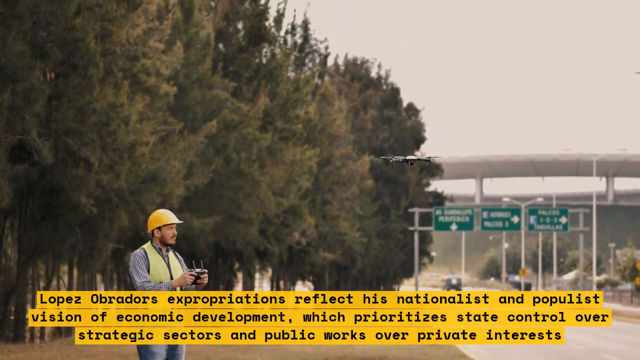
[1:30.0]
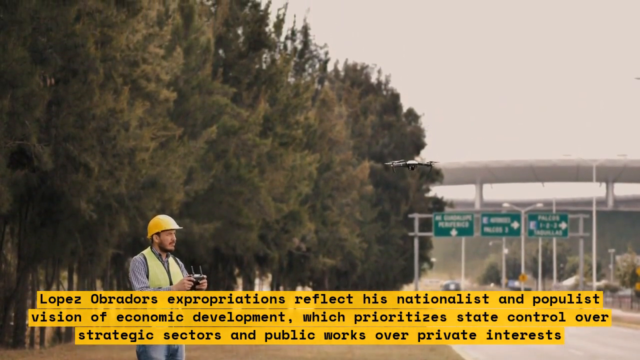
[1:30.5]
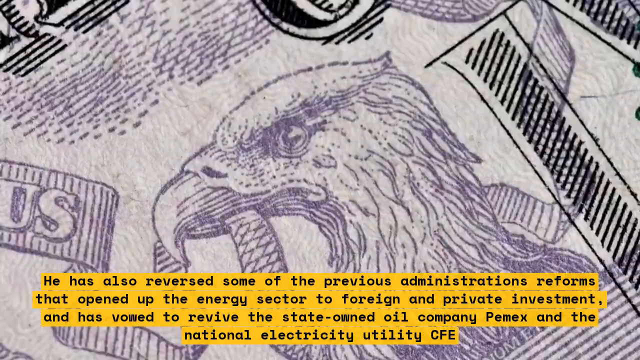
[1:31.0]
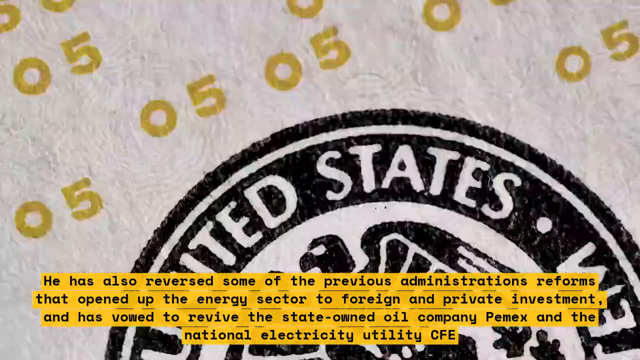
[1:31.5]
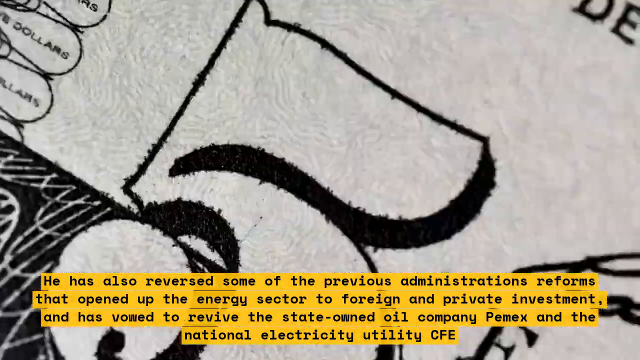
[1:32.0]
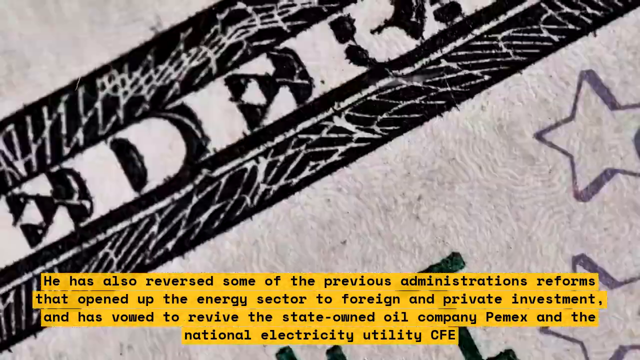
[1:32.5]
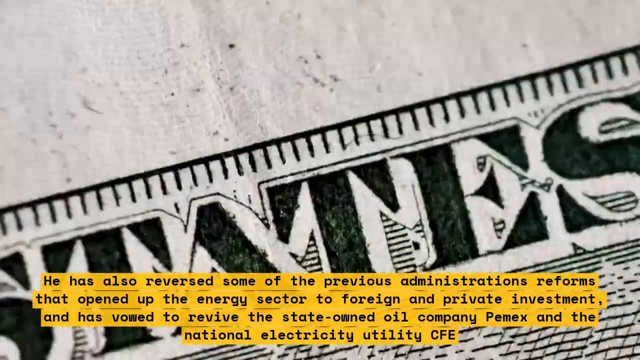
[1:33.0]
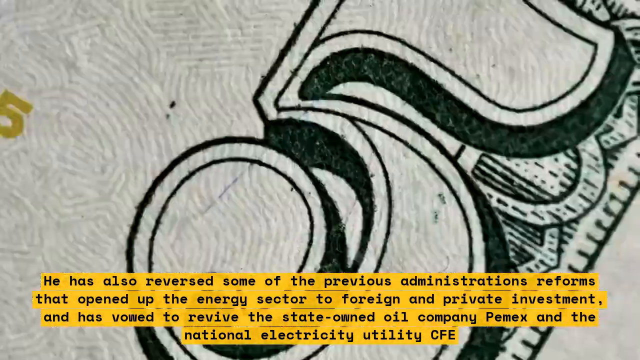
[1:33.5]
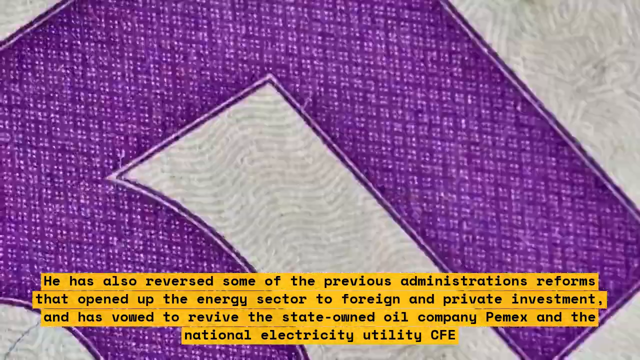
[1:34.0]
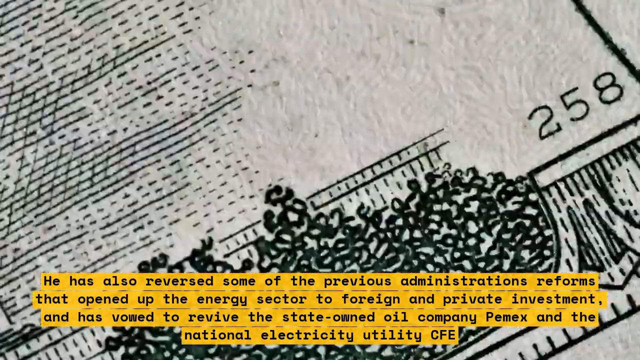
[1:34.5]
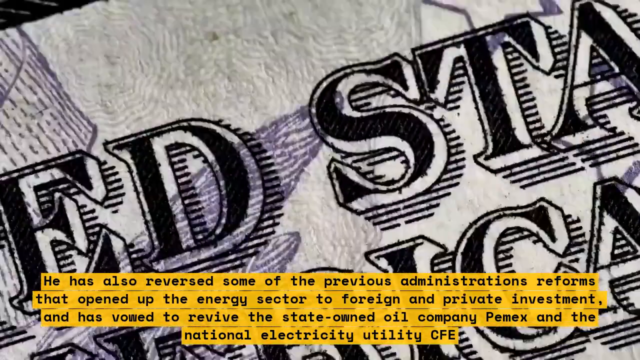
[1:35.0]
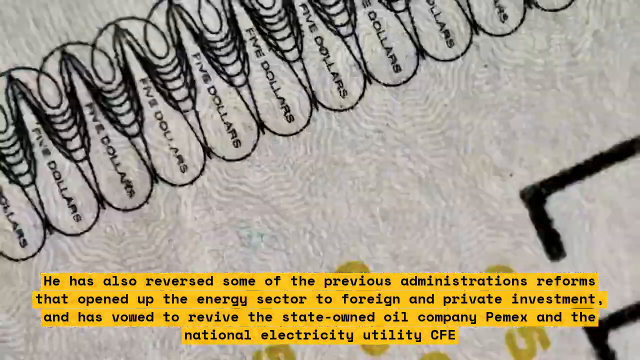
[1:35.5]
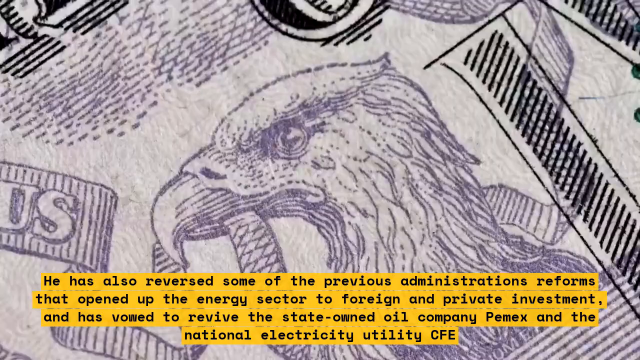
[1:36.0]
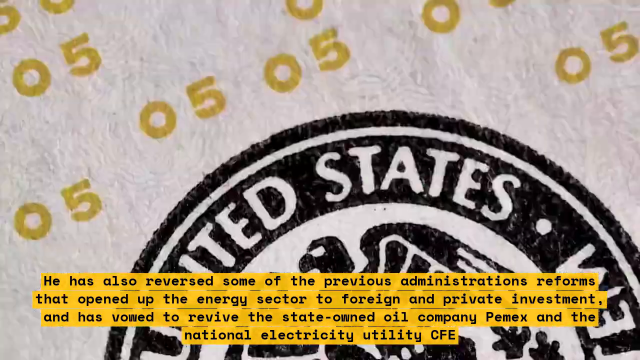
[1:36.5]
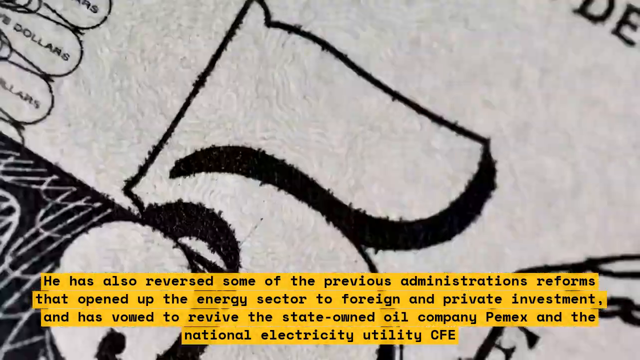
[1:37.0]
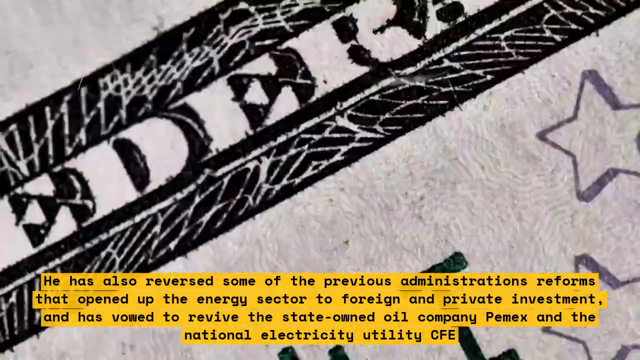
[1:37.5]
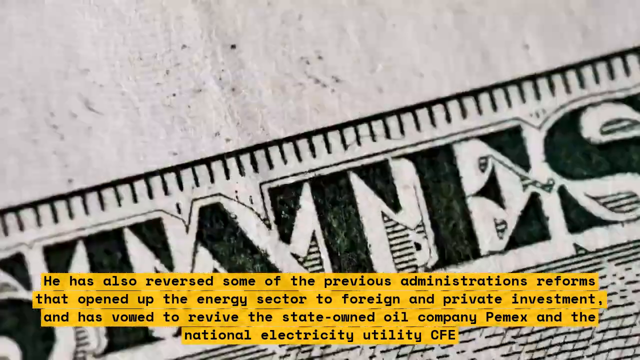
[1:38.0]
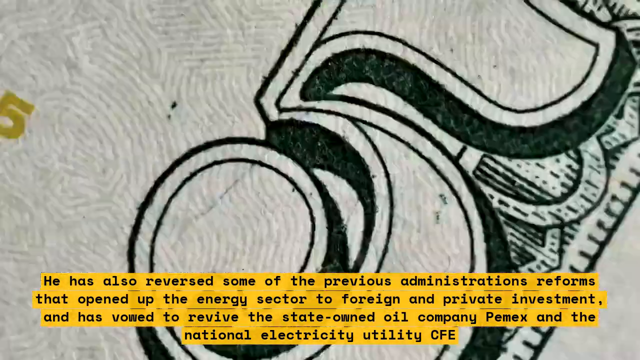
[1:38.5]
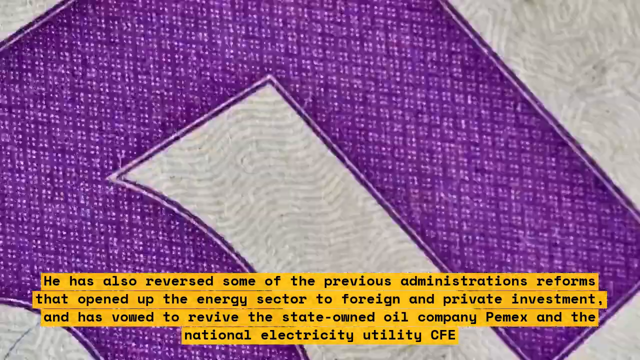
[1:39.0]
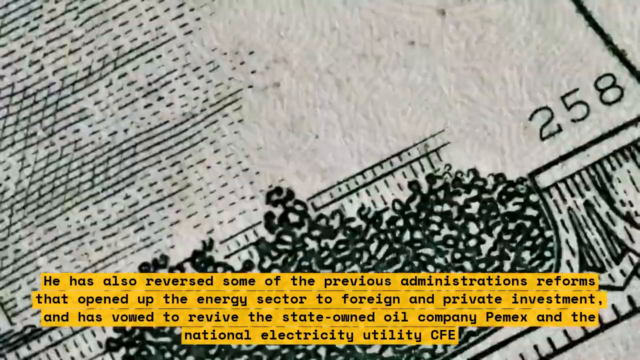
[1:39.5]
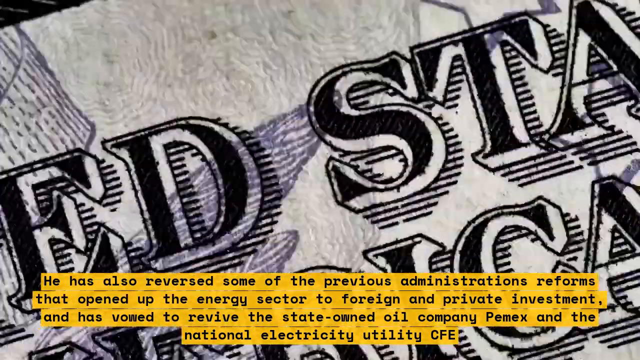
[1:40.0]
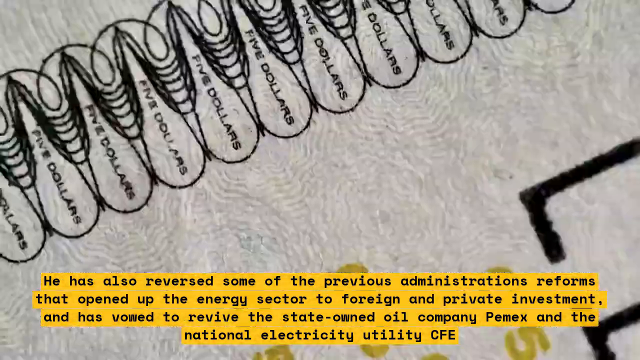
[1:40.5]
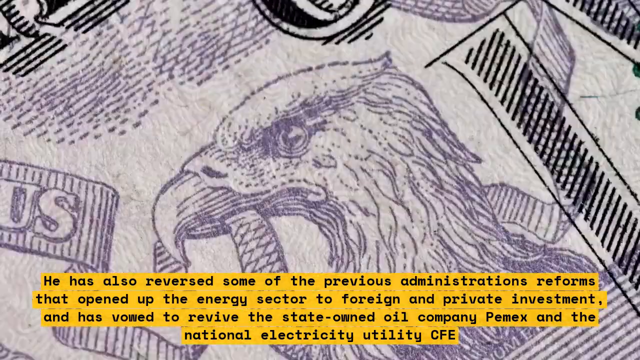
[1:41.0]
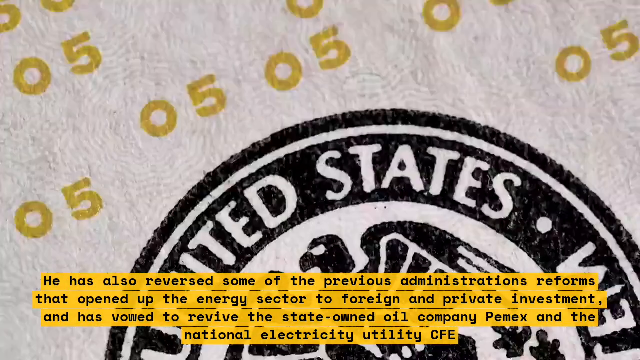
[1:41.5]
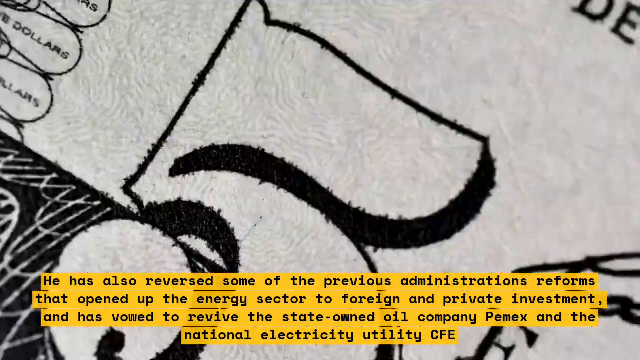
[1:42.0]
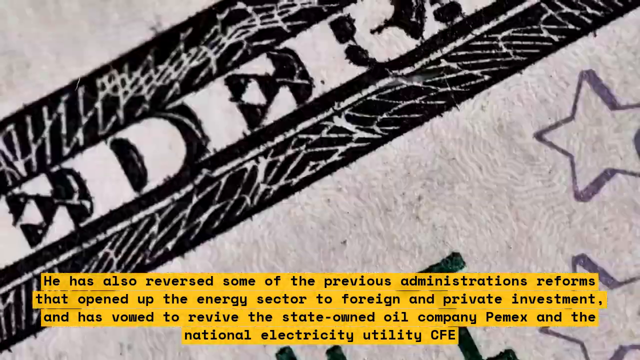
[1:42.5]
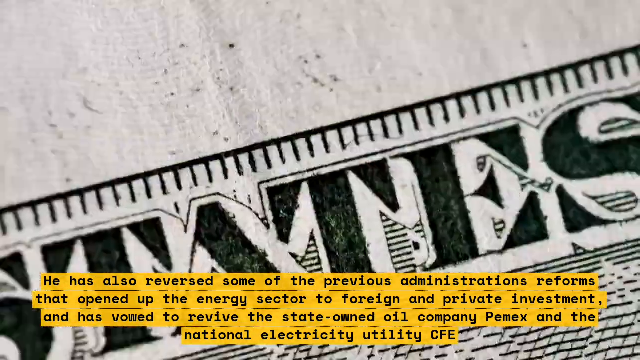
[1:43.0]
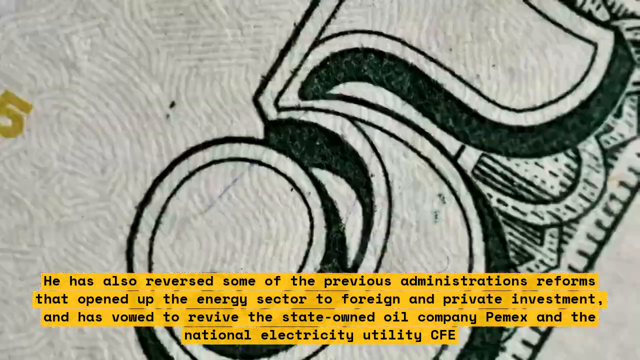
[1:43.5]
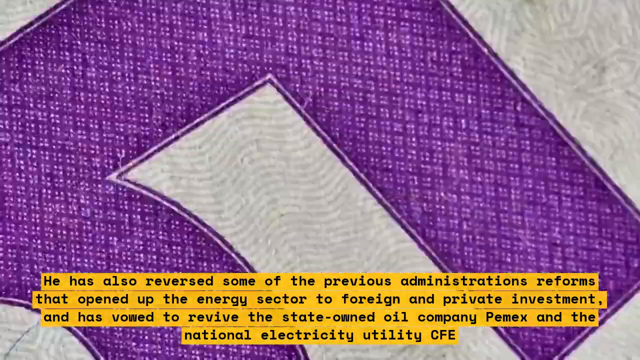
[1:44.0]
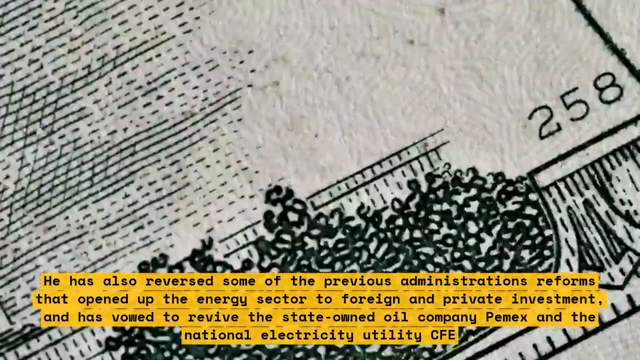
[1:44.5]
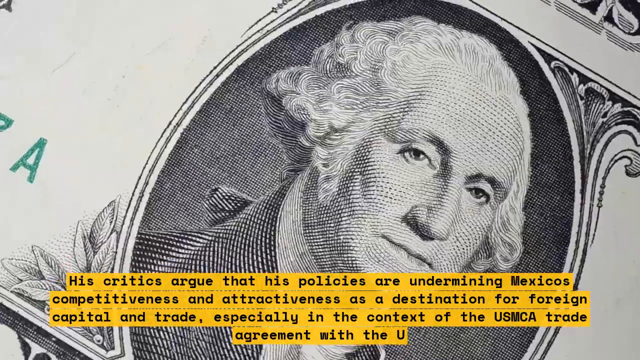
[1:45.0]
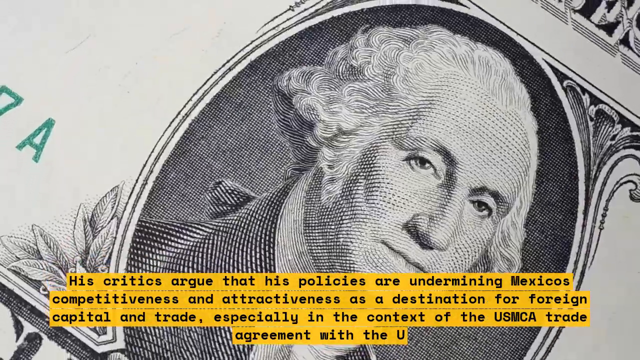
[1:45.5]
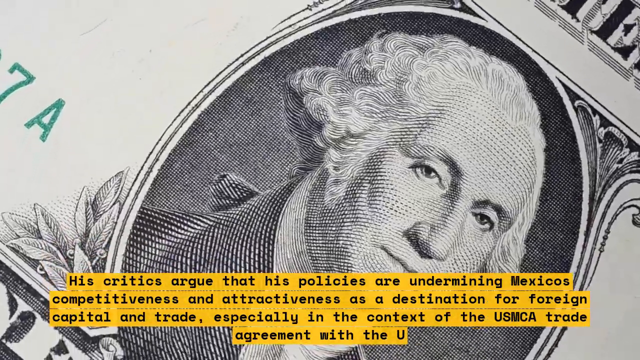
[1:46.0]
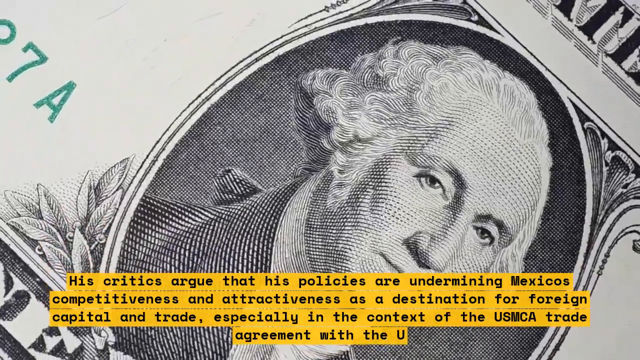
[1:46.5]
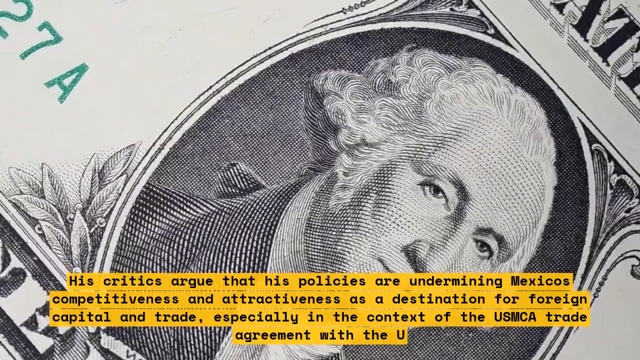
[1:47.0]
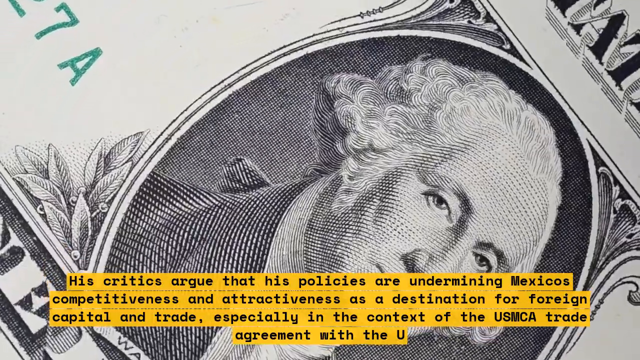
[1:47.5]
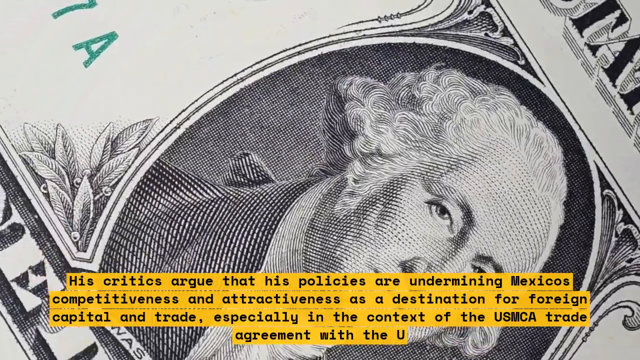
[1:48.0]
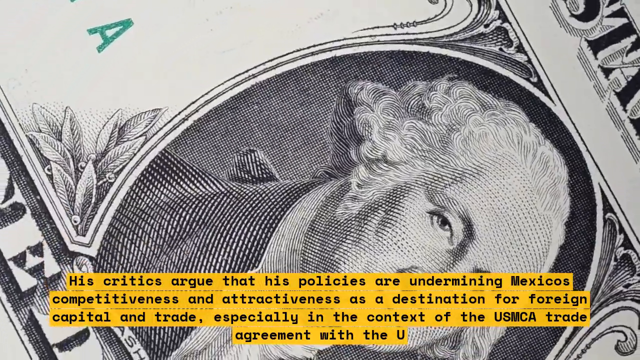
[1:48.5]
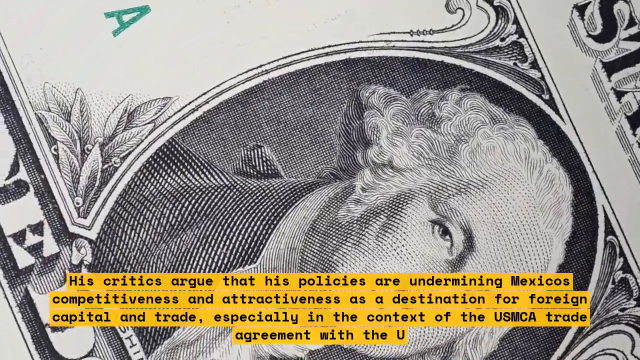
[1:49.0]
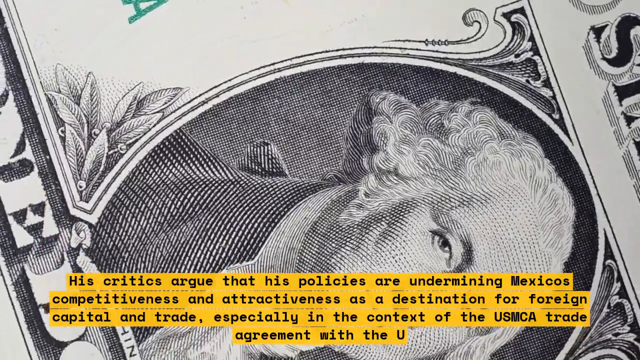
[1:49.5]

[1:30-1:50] The man in the yellow hard hat and yellow vest is still flying the drone. Text beneath him reads: "Lopez Obrado's expropriations reflect his nationalist and populist visions of economic development which prioritizes state control over strategic sectors and public works over private interests." There are a lot of trees behind him, and he appears to be right at the side of an intersection or busy area with a lot of traffic going through. The scene moves to a lot of money, with text reading: "he has also reversed some of the previous administration's reforms that opened up the energy sector to foreign and private investment and has vowed to revive the state-owned oil company Pemex and the National Electricity Utility CFE." Different bills are shown up close, with the words "United States", a five, and different dollar amounts visible.